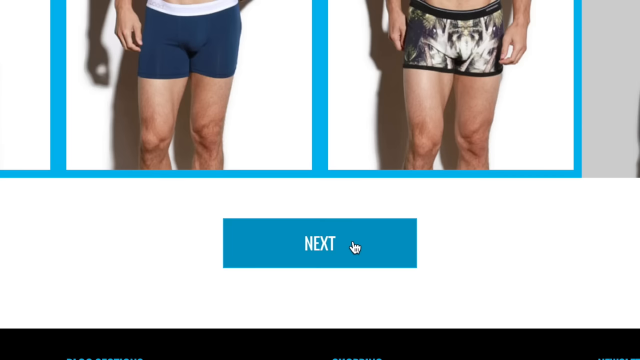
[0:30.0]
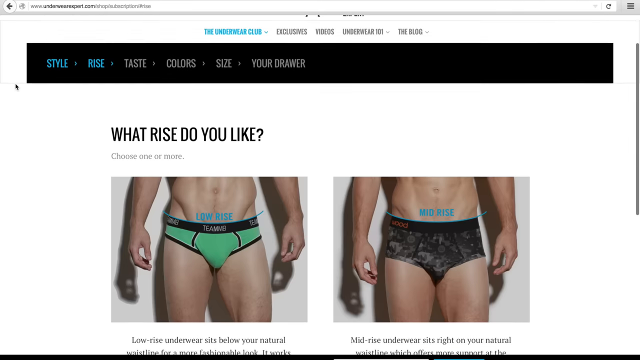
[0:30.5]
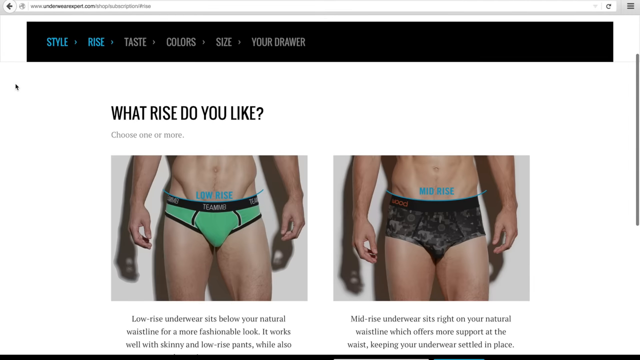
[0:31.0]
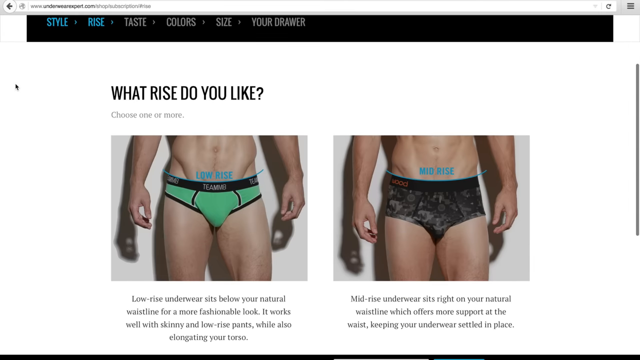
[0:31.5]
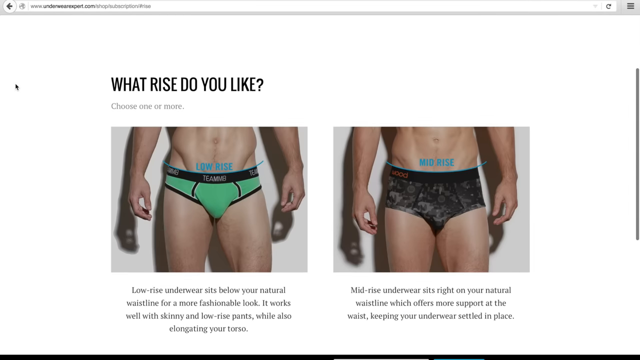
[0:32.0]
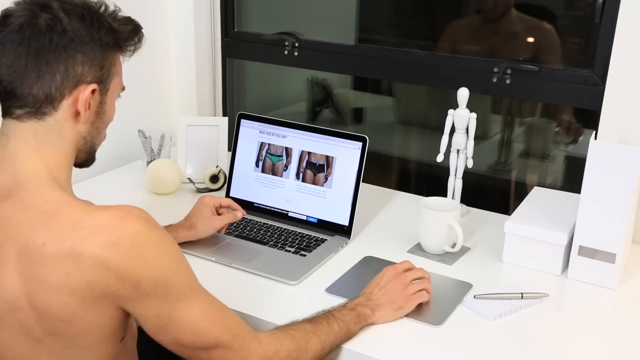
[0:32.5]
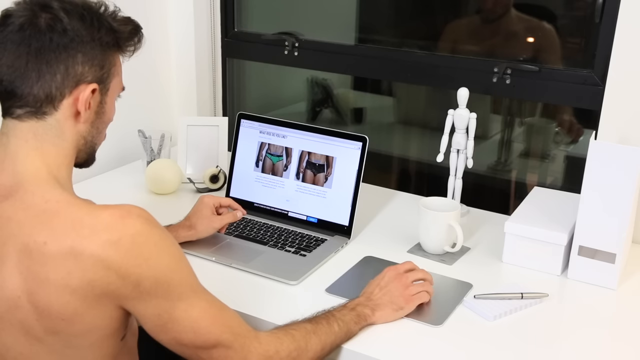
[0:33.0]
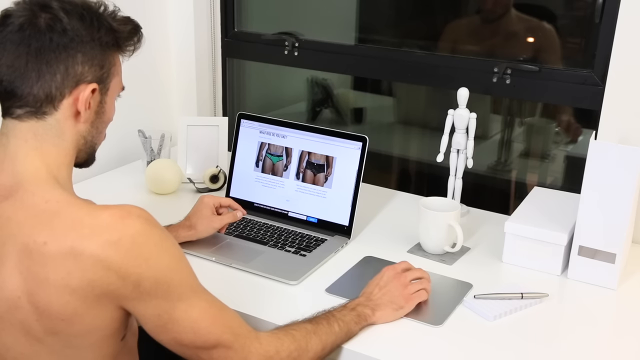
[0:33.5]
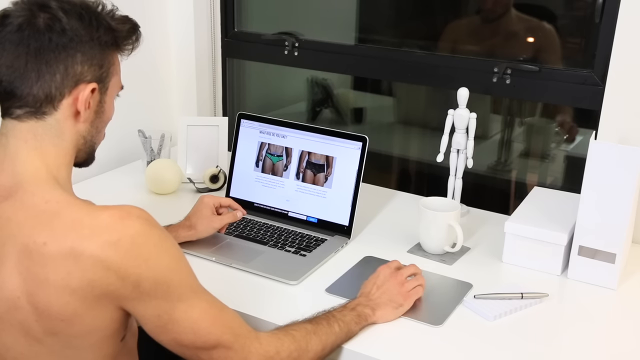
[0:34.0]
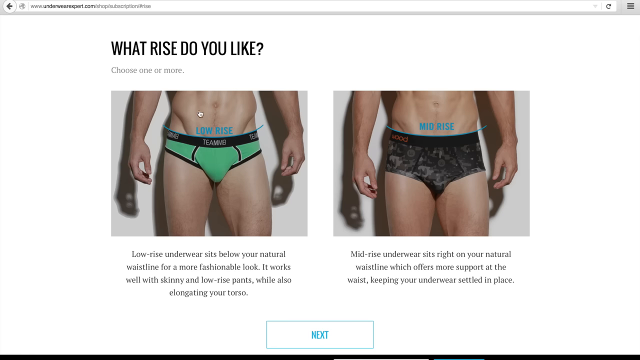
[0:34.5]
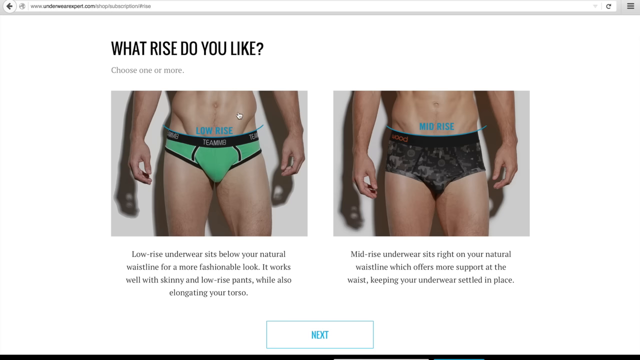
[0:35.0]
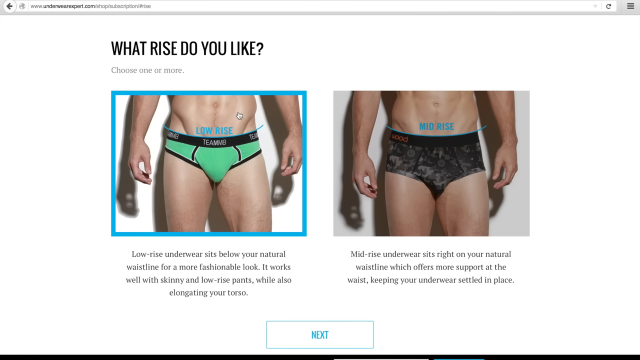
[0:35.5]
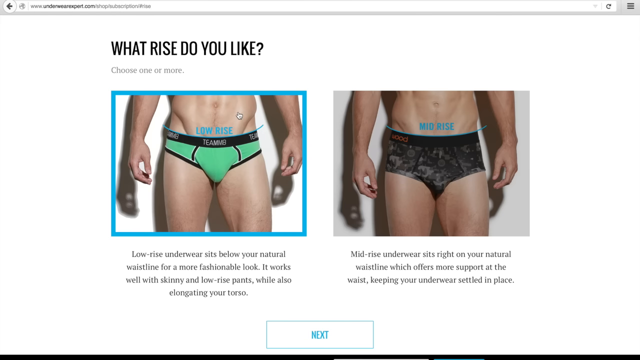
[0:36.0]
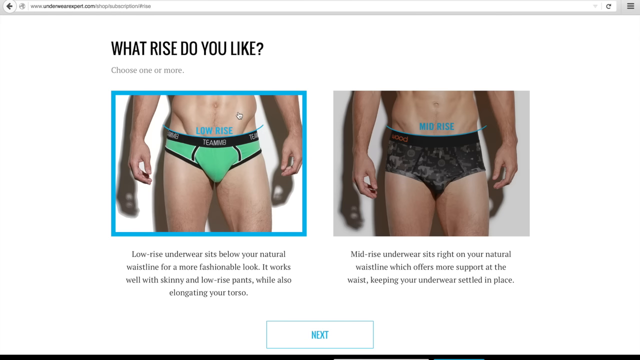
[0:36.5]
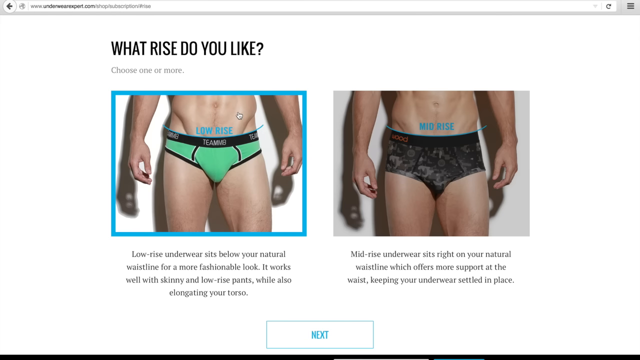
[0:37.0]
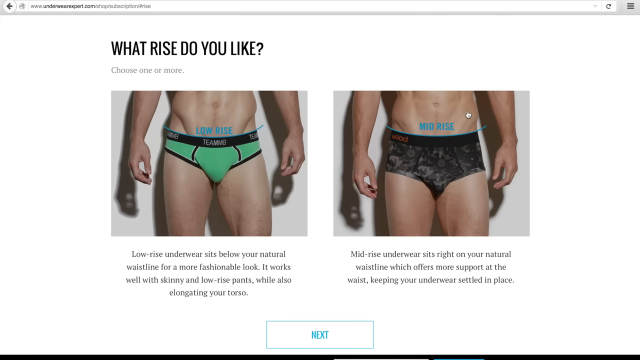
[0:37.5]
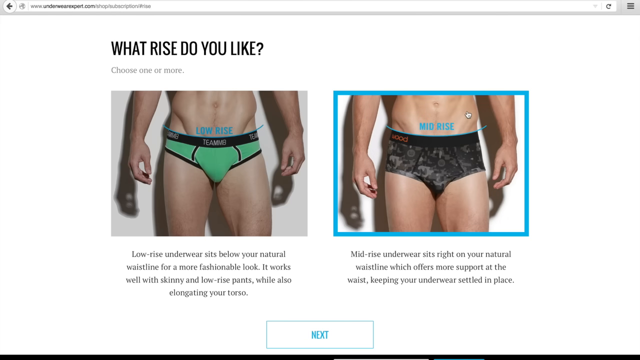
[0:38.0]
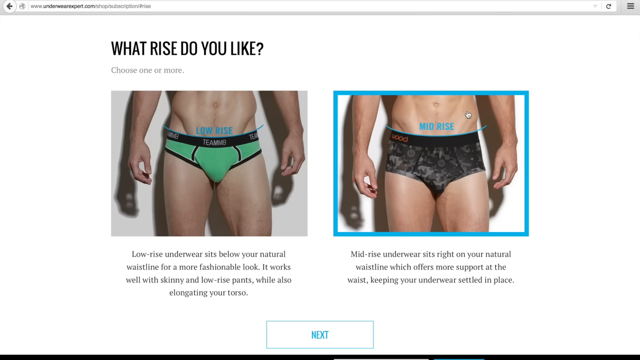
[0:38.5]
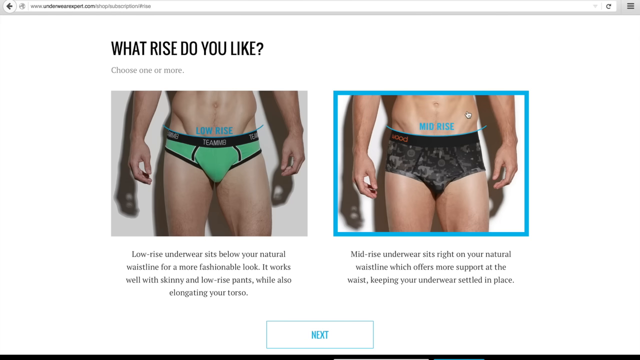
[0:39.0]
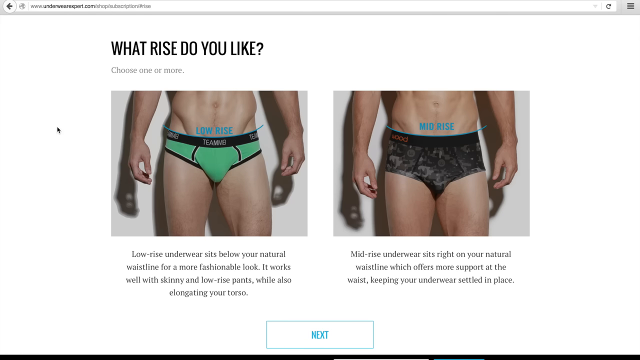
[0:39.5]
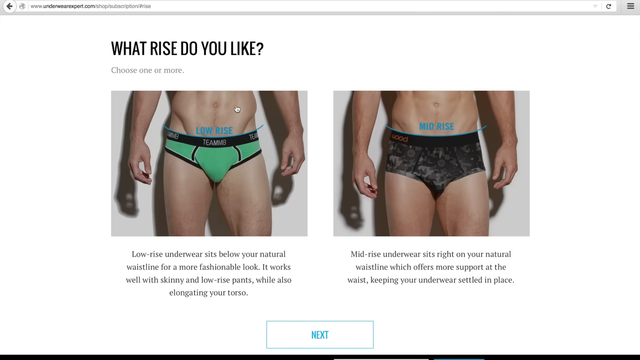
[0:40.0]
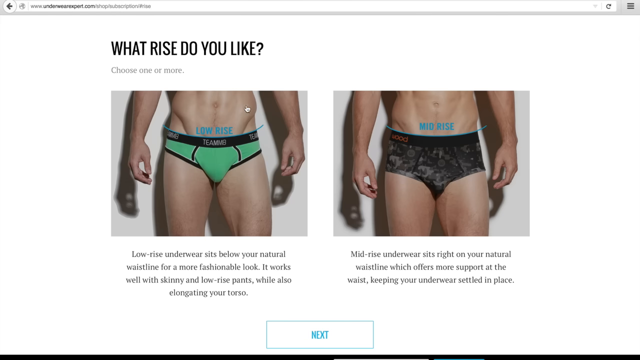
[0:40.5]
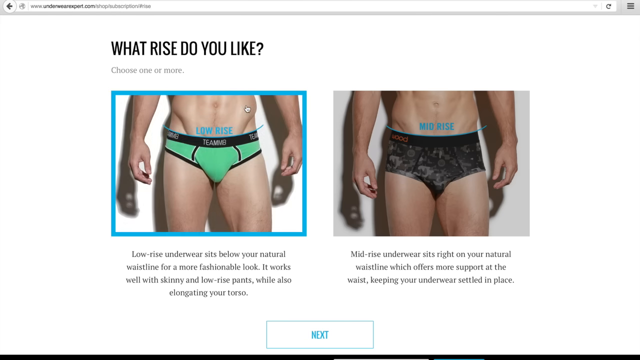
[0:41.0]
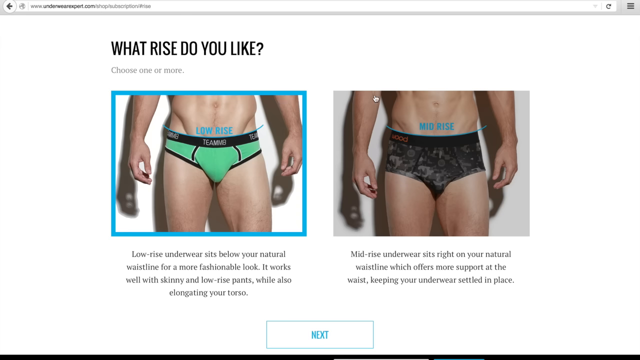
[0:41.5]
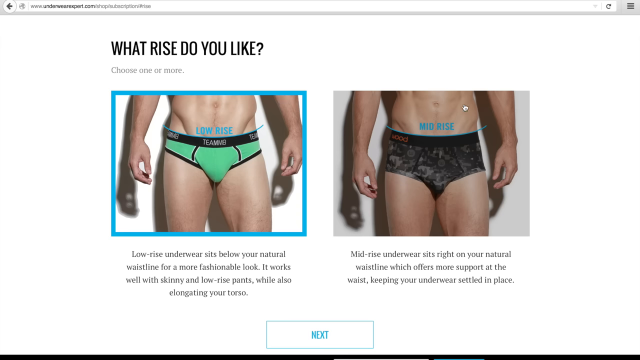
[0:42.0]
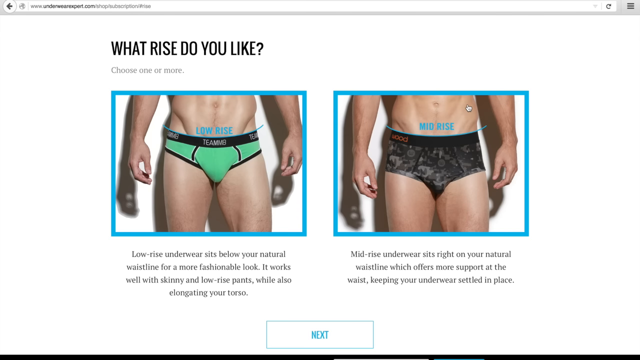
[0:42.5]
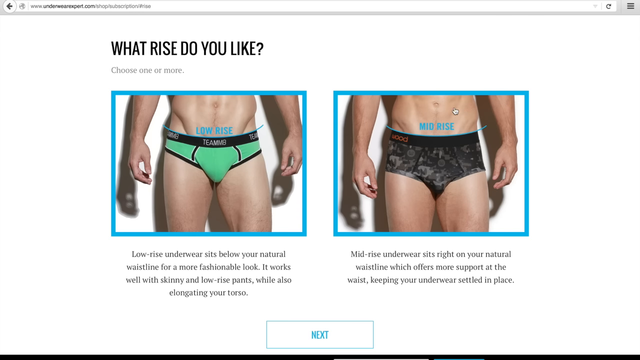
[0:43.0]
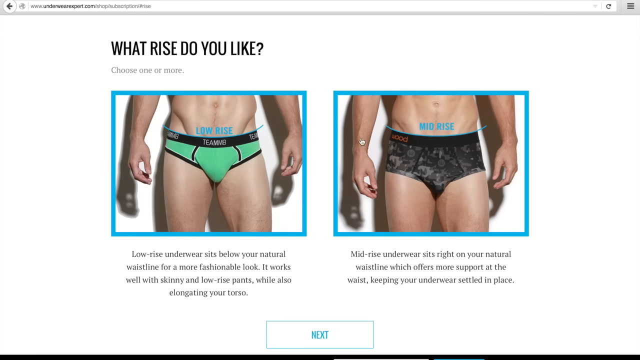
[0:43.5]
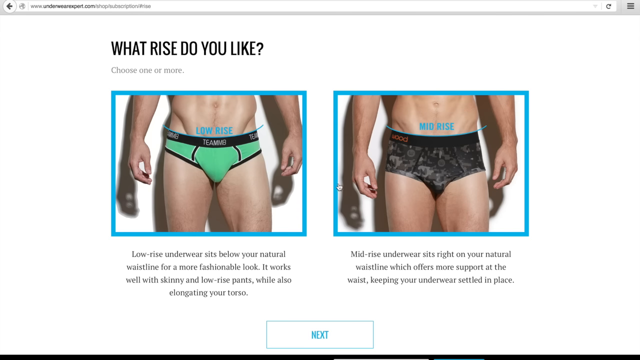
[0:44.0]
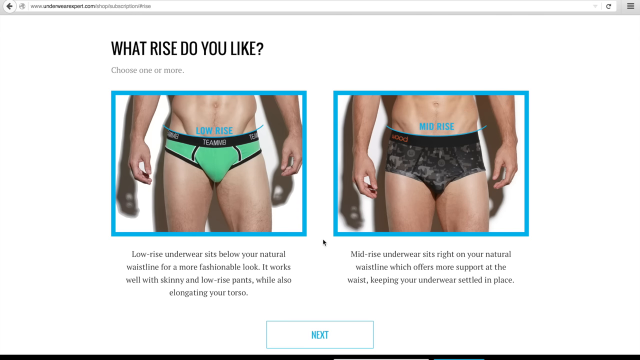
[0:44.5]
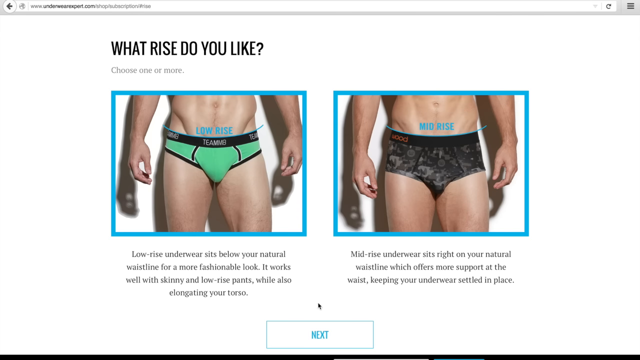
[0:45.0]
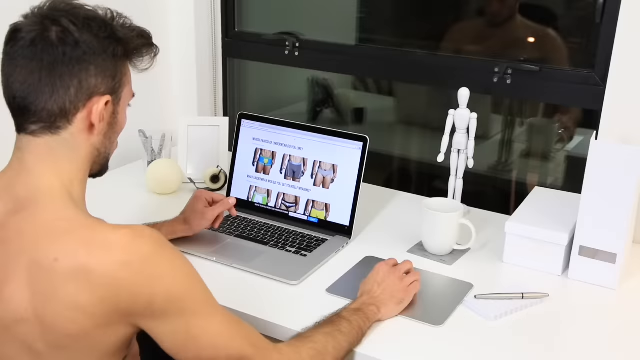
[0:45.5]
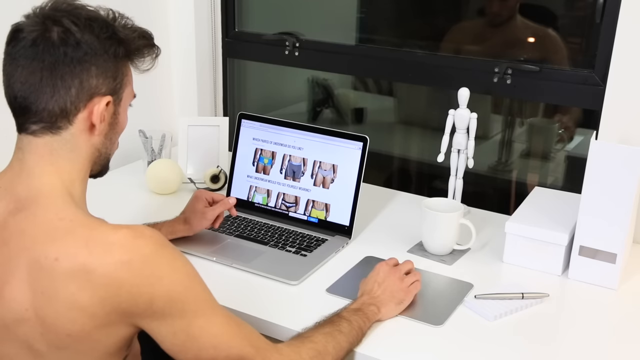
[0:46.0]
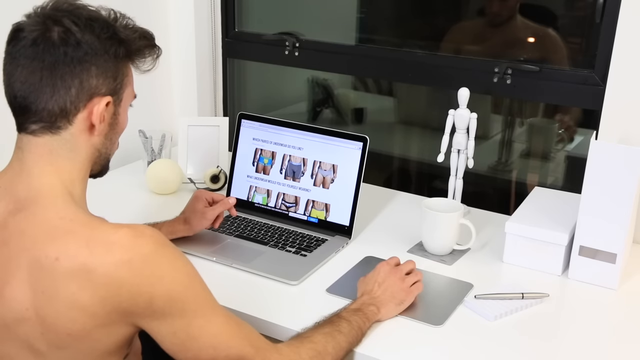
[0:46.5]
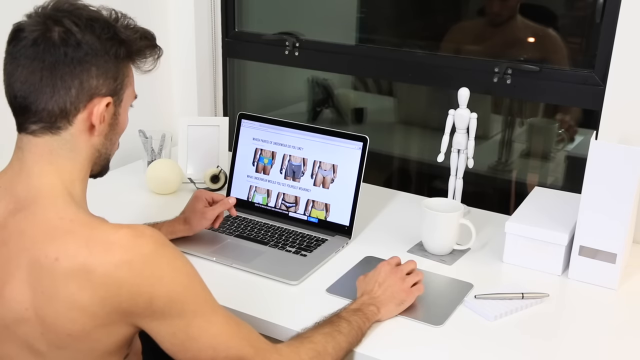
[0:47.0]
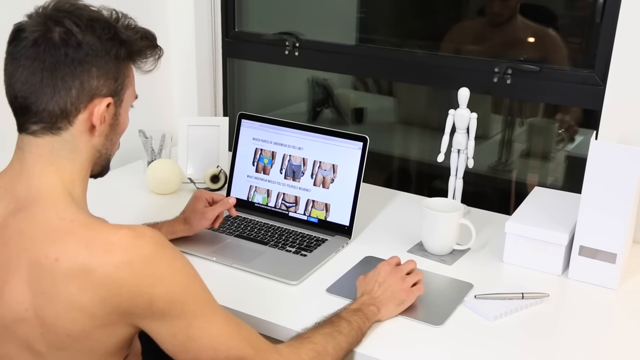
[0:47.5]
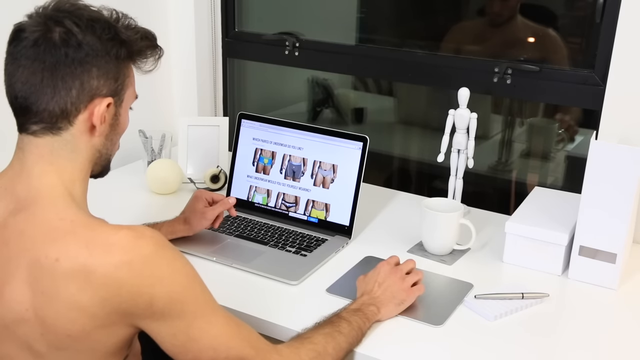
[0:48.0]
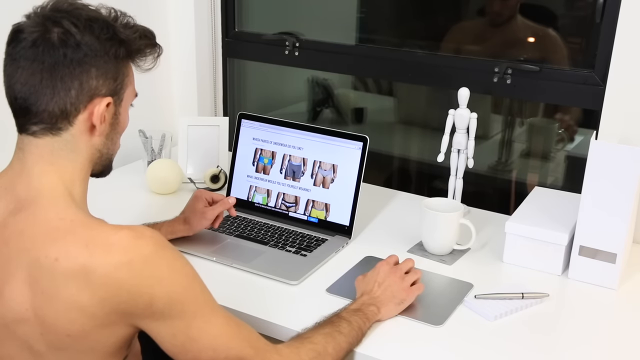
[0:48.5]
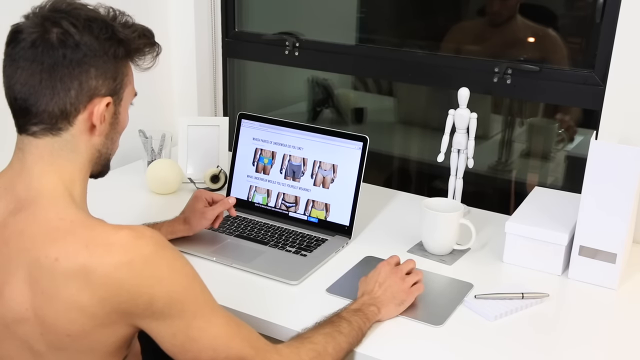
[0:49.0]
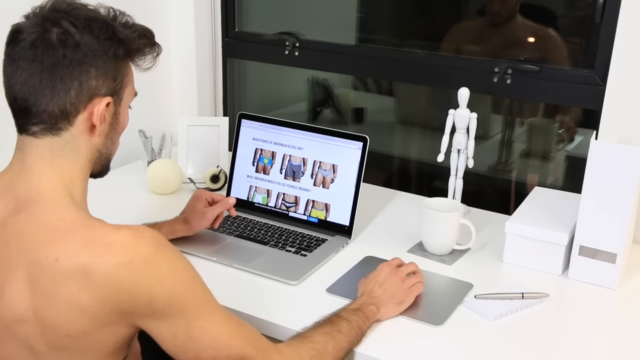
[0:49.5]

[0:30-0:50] The video continues to show the laptop screen of the man sitting at the desk. On the laptop is an illustration of different men, and the man clicks on them, apparently to expand them. The men are shown in a yellow box, a black box, a green and white box, and a blue box. The video keeps switching between the seated man and the laptop screen as he navigates through it, showing masculine men wearing the different types. One section on a blue space reads "low-rise underwear, placed below your natural waistline for a more fashionable look", another appears on a black area, and another description reads "mid-rise underwear, fit right on your natural waistline, which offers more support at the waist". The screen shows different types of underwear.